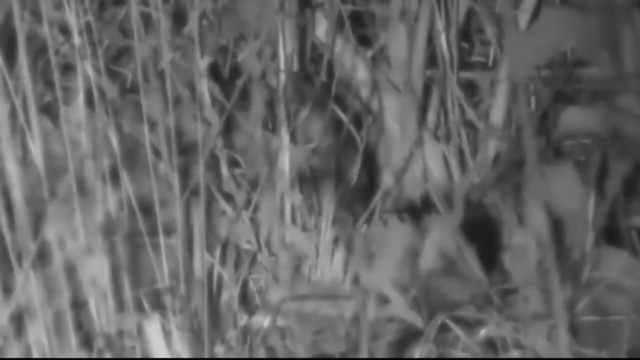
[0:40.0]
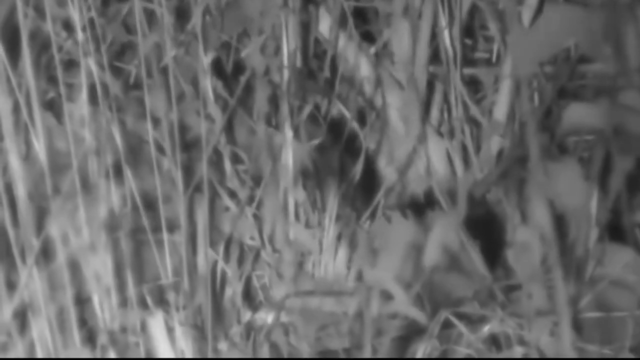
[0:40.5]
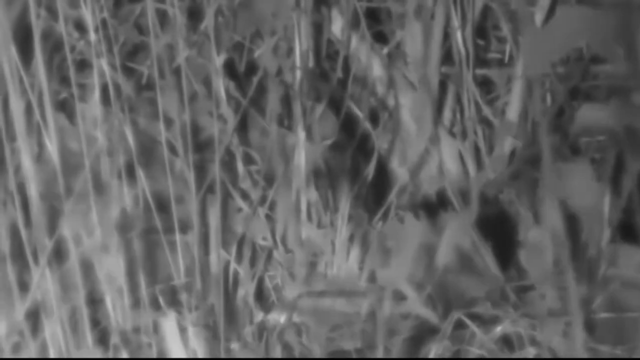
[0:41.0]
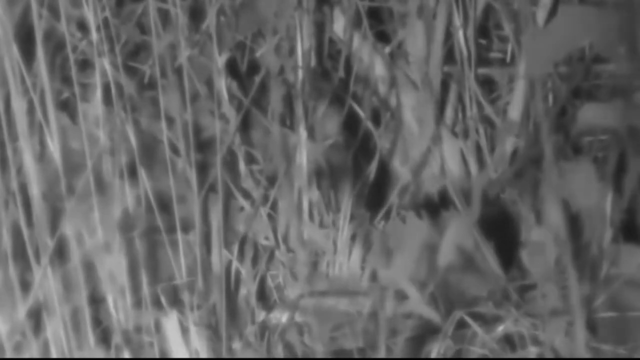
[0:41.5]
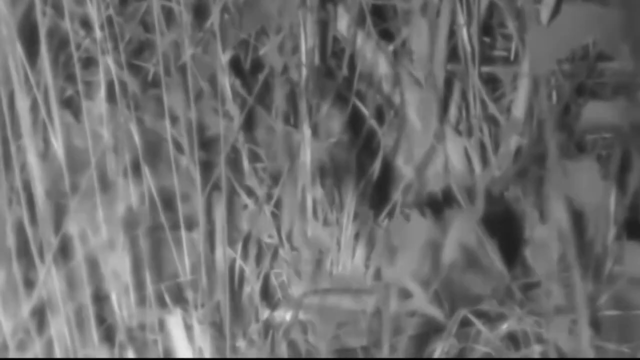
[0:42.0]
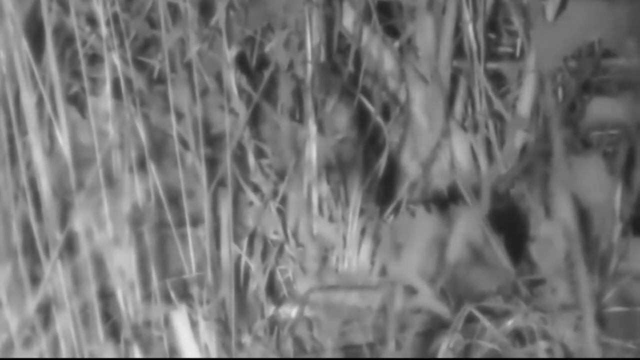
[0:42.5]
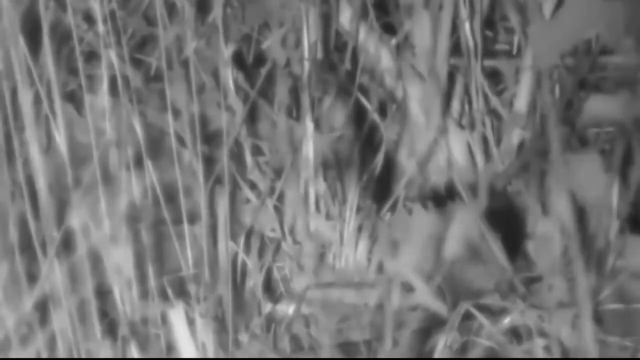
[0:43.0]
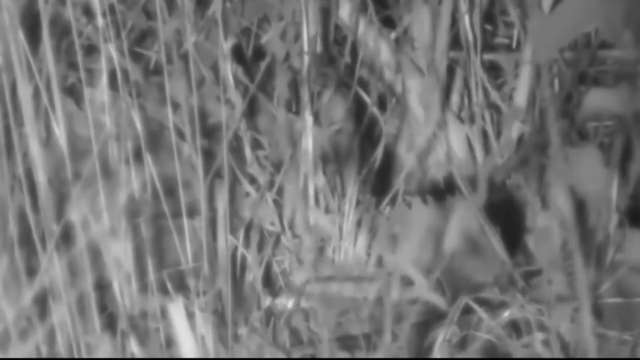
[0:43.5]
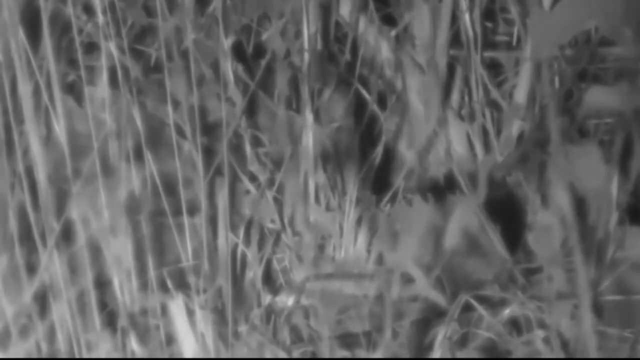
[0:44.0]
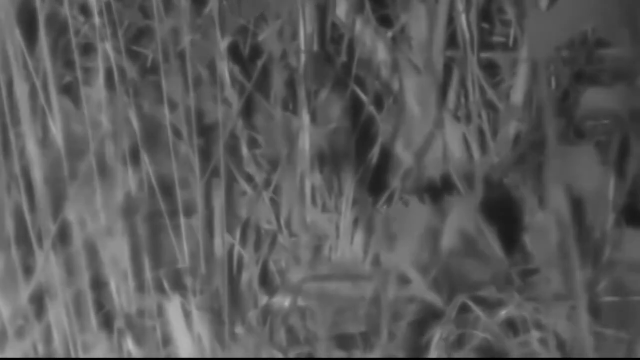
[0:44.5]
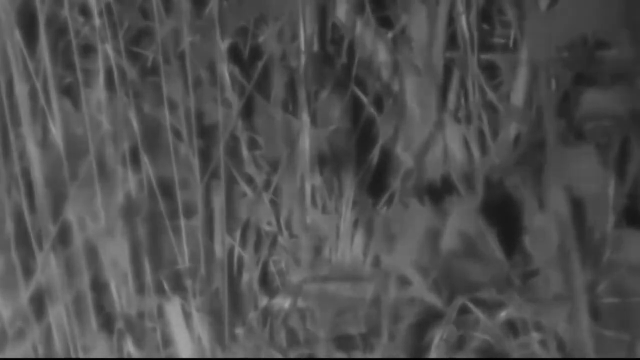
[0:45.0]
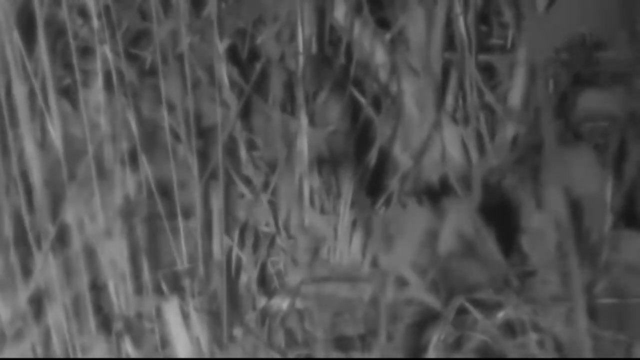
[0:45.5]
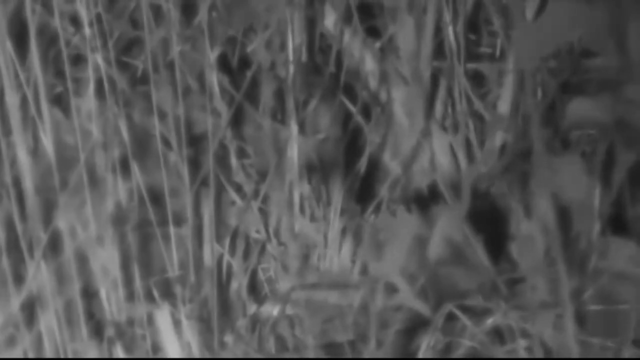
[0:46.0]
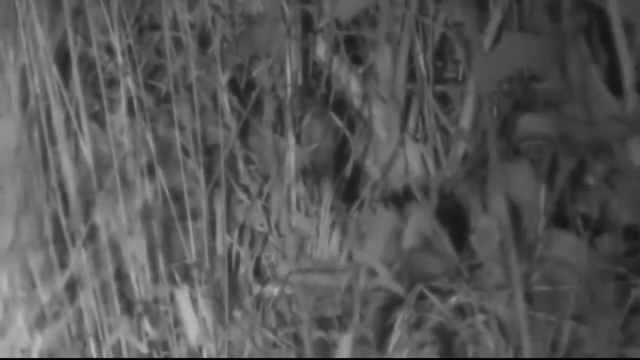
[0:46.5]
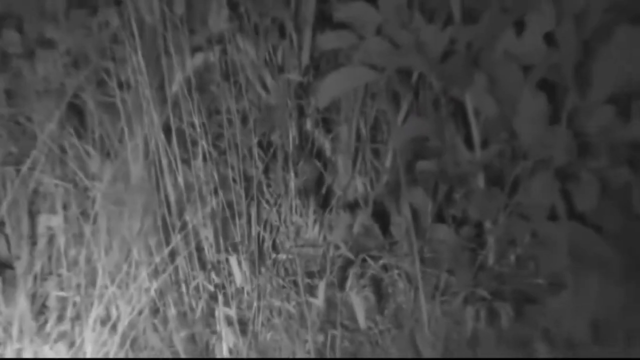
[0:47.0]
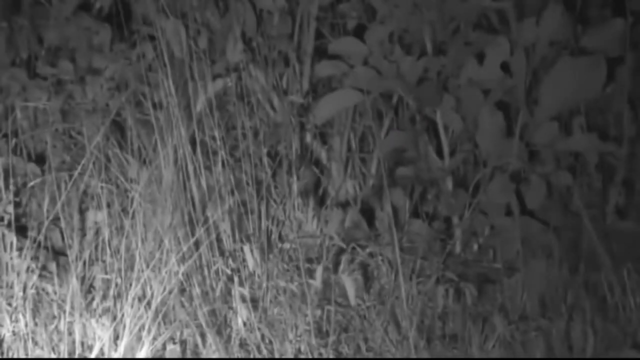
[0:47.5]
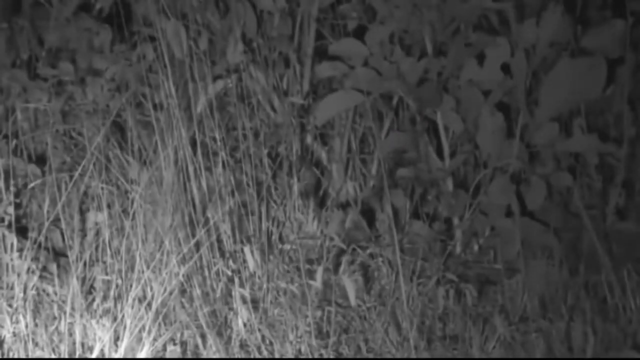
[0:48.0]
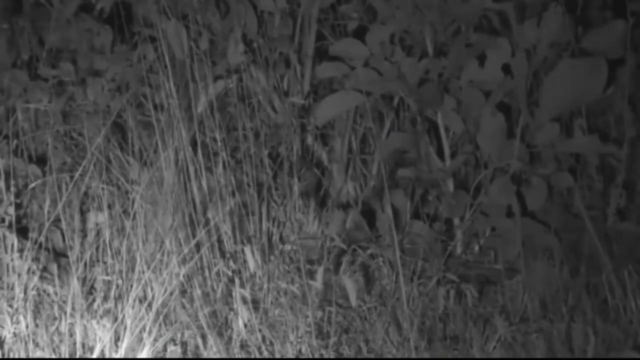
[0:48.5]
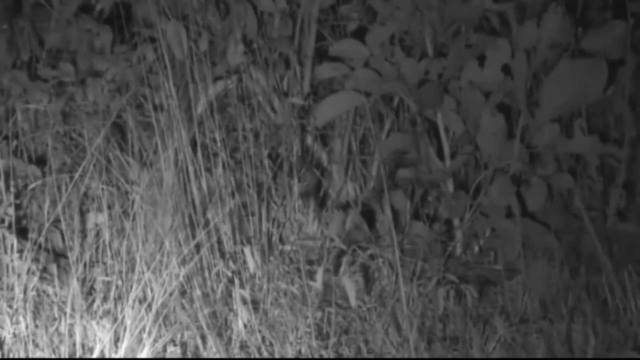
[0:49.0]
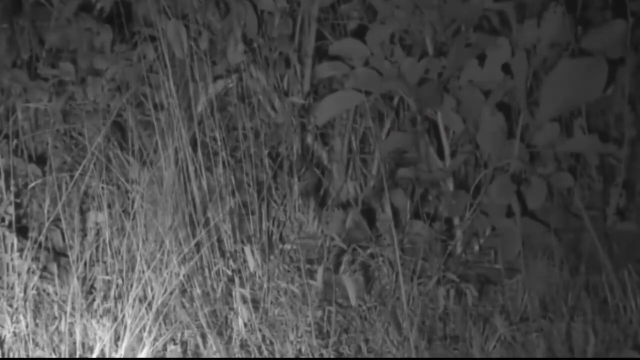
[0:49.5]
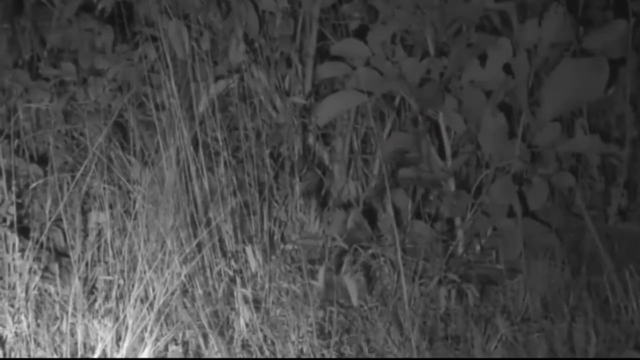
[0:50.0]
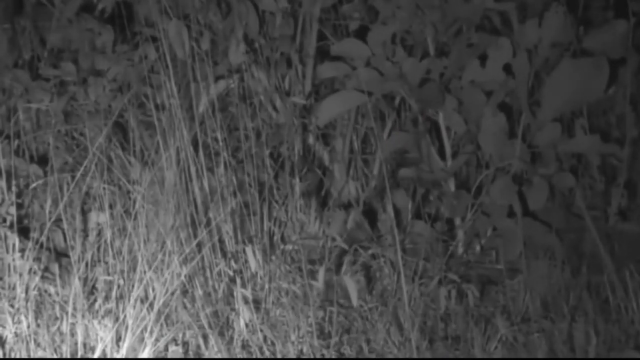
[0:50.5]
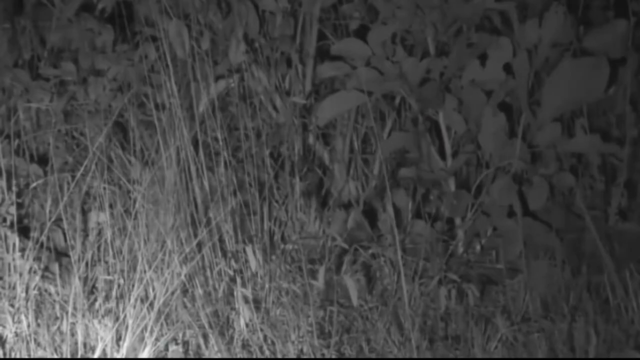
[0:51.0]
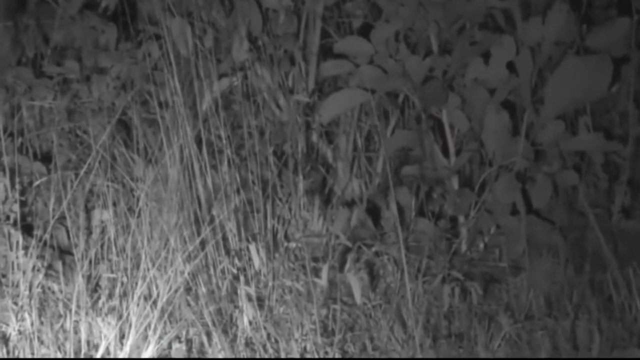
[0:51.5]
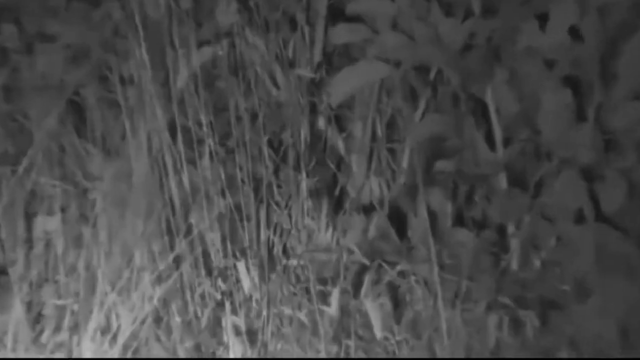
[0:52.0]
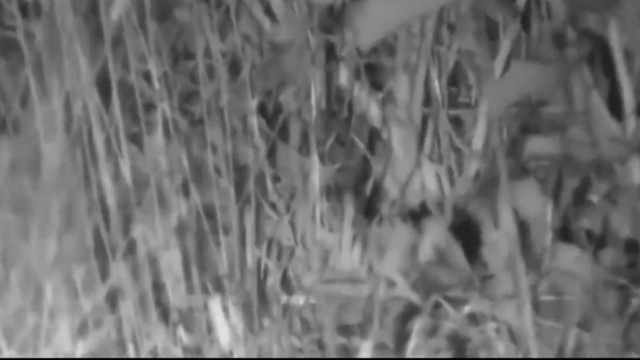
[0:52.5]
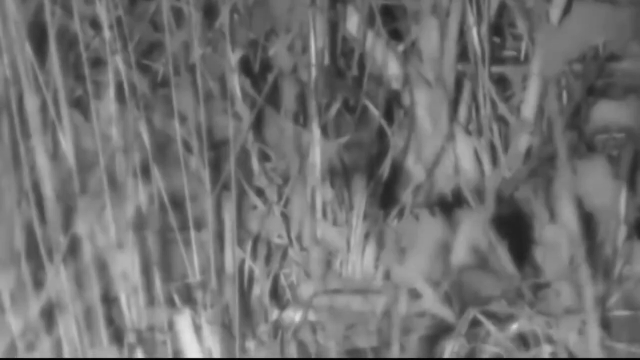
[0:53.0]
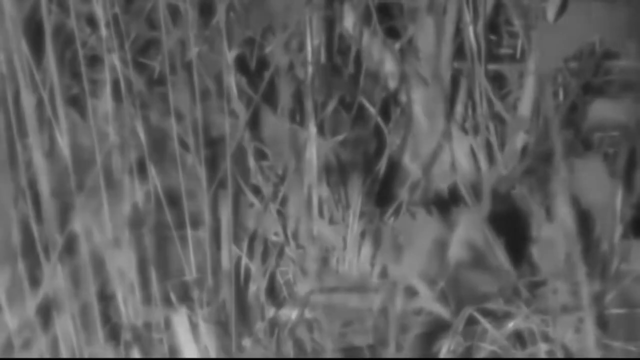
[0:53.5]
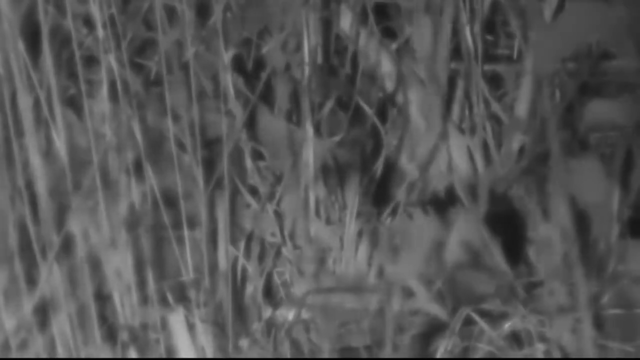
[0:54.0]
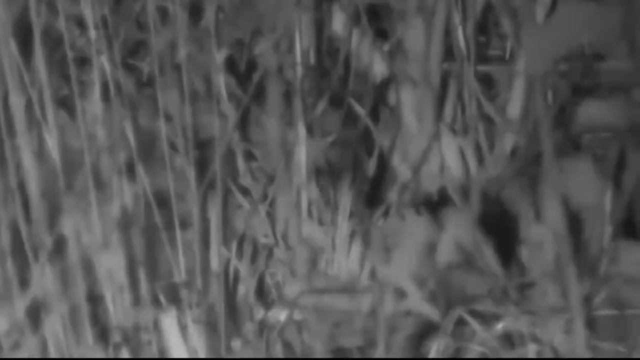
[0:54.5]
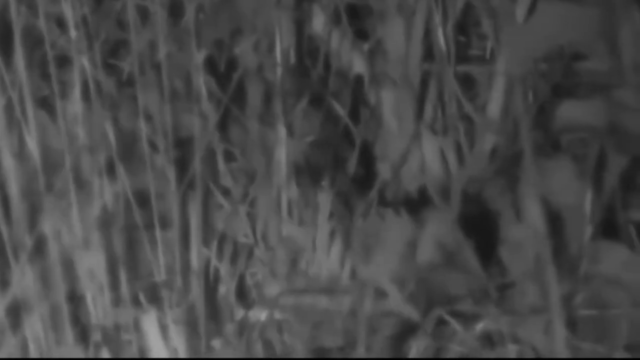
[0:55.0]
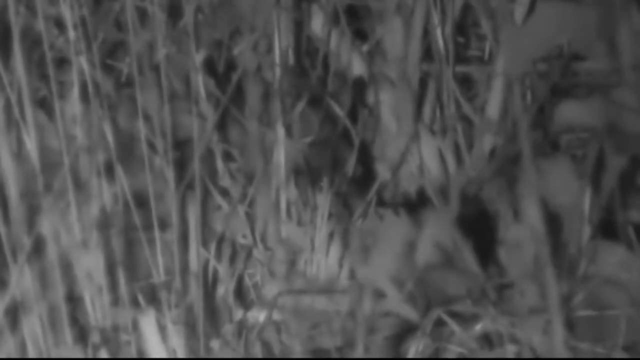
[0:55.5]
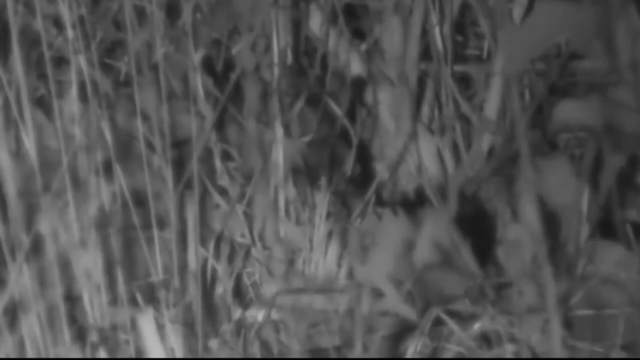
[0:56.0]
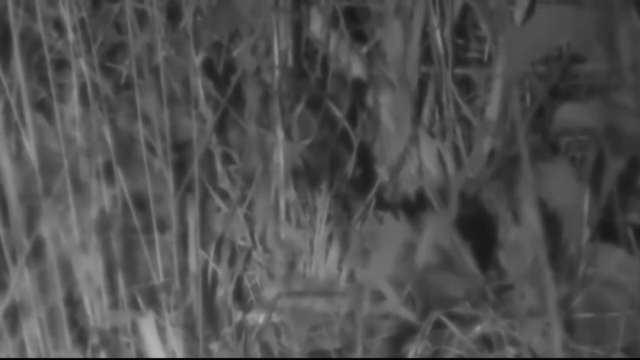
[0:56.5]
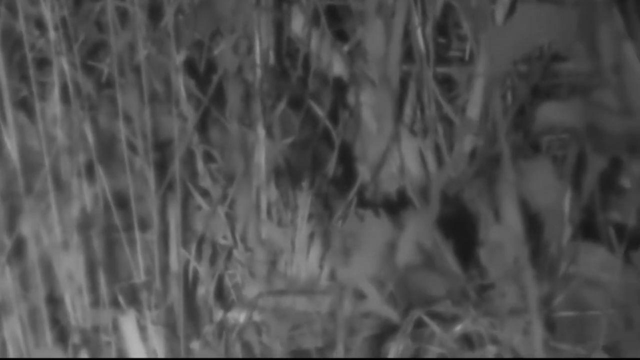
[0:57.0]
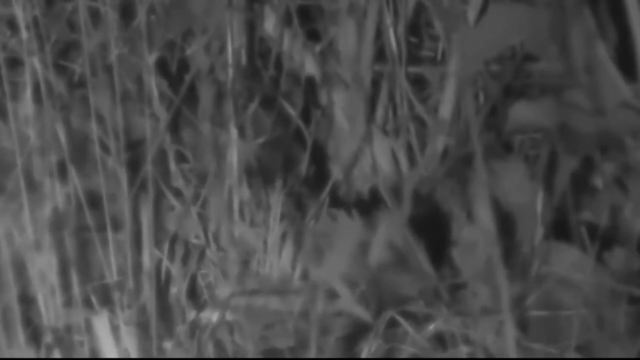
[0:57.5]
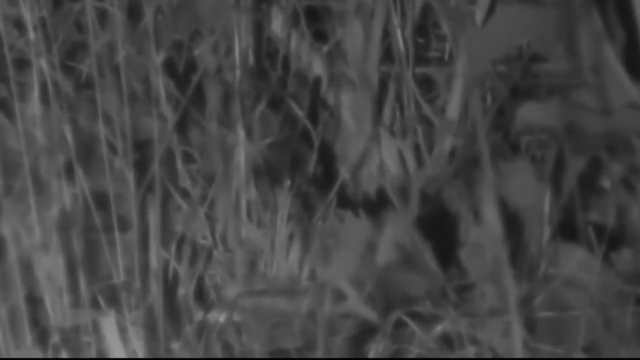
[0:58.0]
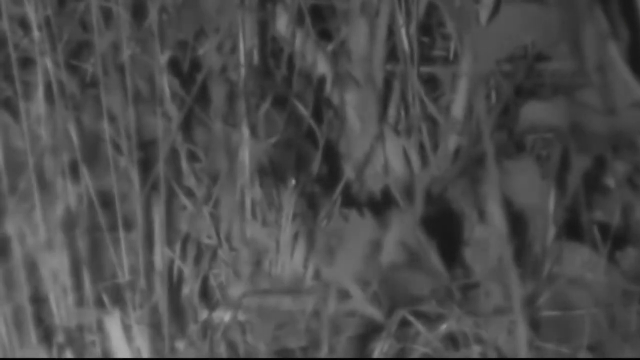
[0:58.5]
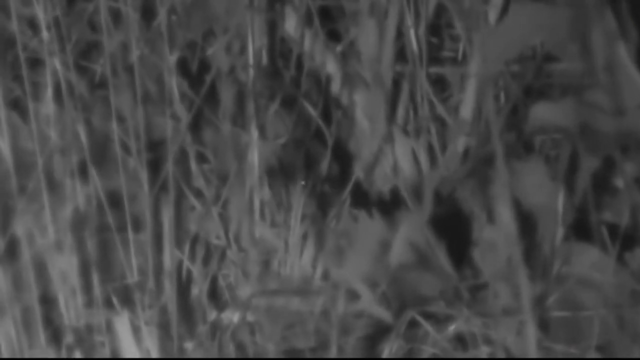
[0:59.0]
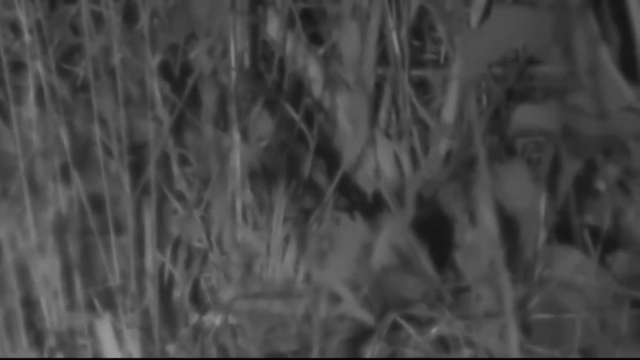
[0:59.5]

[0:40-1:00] On the right side there appears to be a person sitting down. In the center there is a lot of movement, and the grass moves, but whatever is there is very well hidden and camouflaged. On a closer look, something is moving, possibly an arm or possibly a snake.